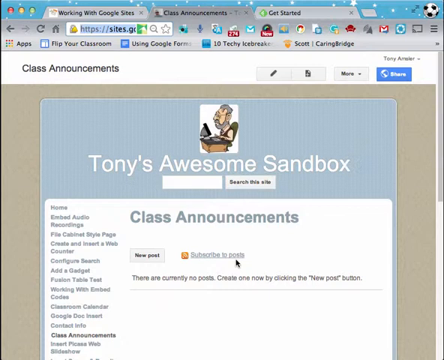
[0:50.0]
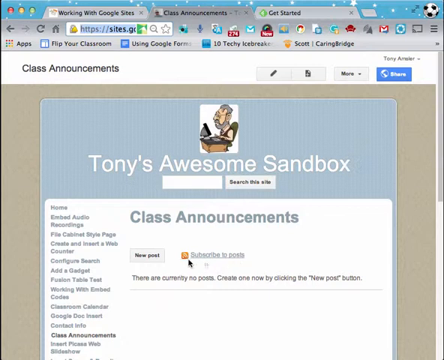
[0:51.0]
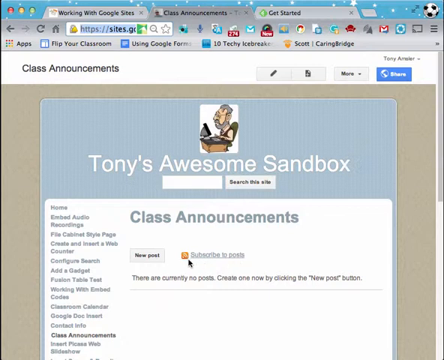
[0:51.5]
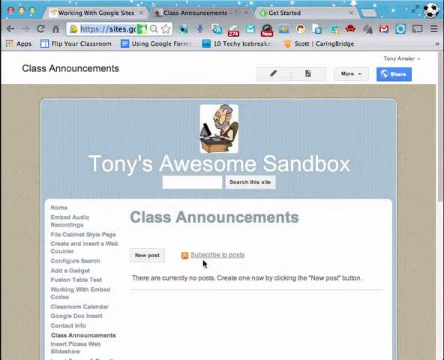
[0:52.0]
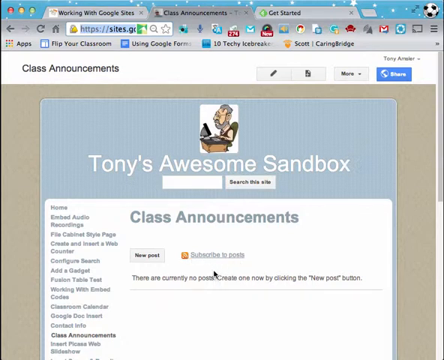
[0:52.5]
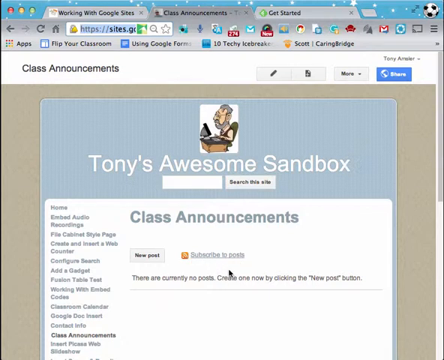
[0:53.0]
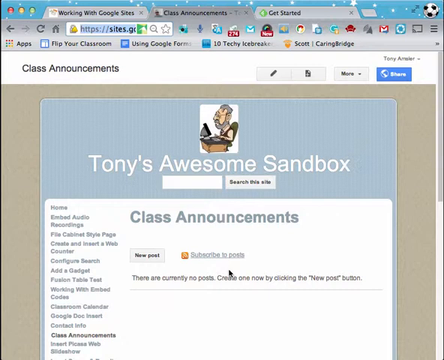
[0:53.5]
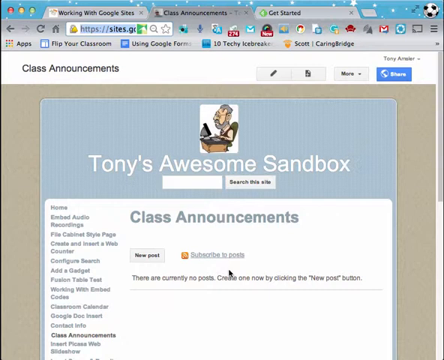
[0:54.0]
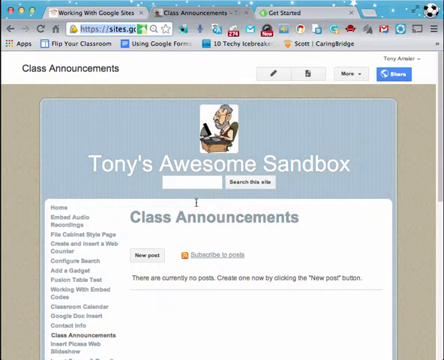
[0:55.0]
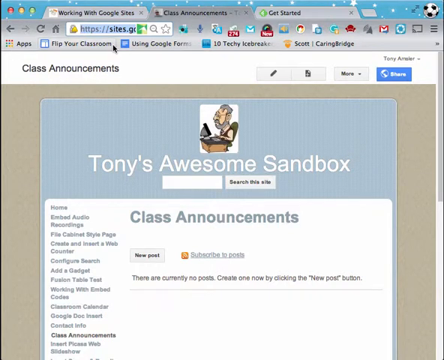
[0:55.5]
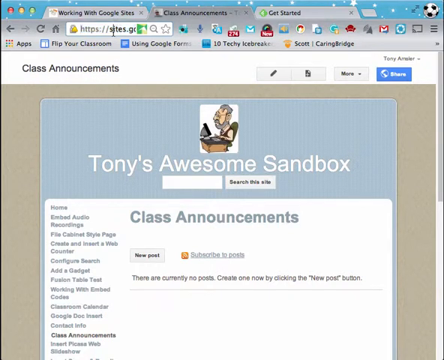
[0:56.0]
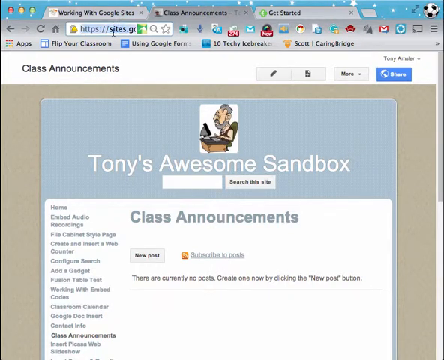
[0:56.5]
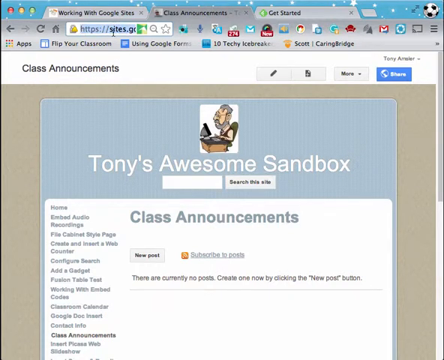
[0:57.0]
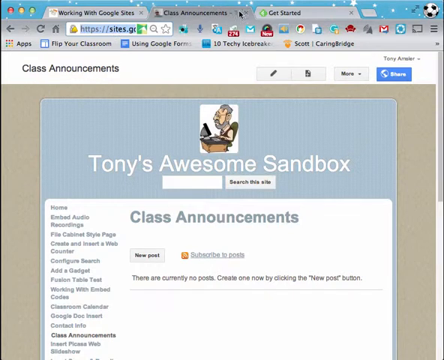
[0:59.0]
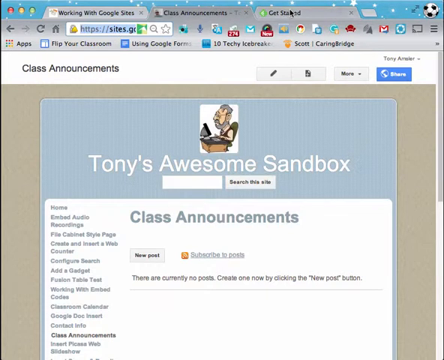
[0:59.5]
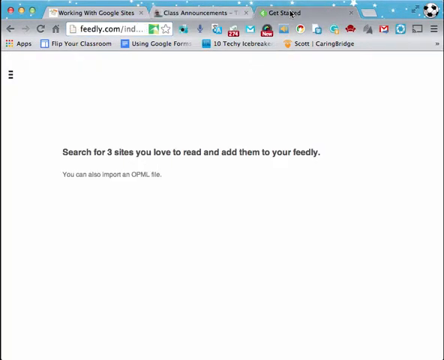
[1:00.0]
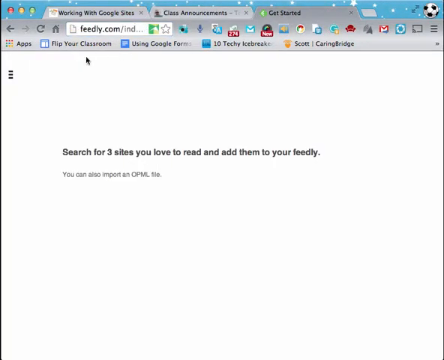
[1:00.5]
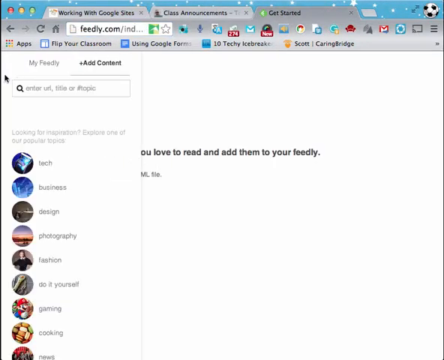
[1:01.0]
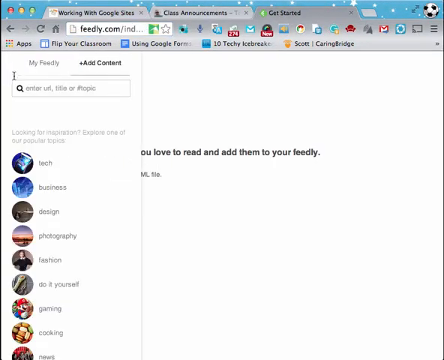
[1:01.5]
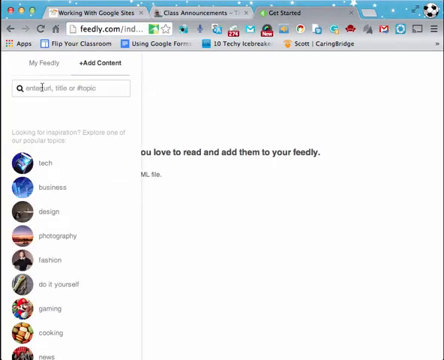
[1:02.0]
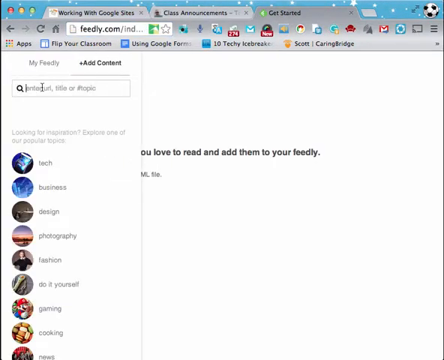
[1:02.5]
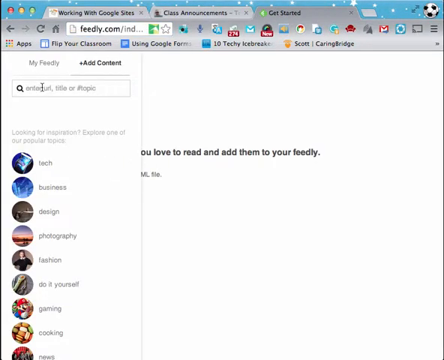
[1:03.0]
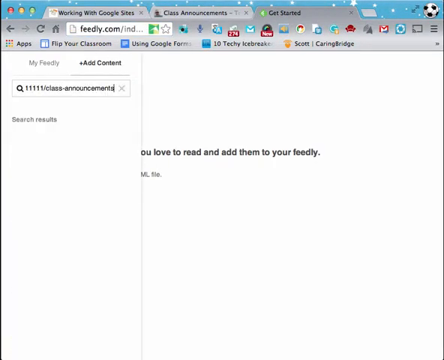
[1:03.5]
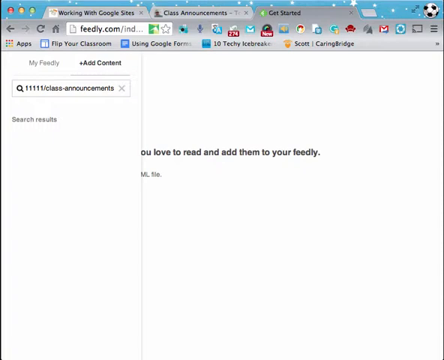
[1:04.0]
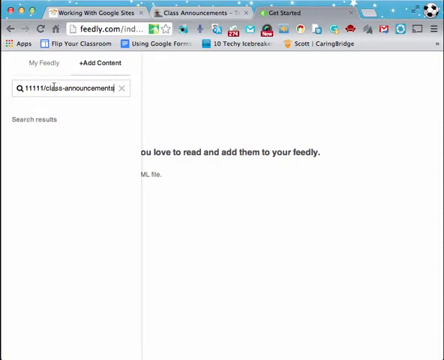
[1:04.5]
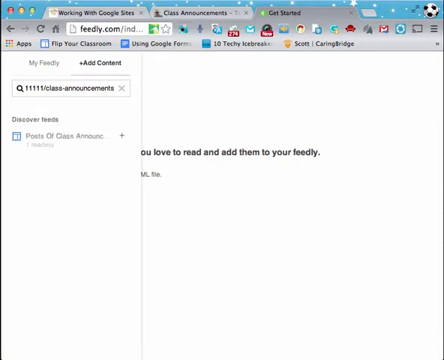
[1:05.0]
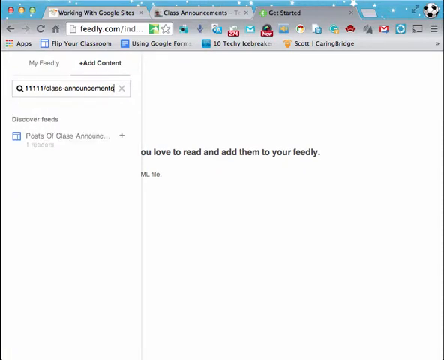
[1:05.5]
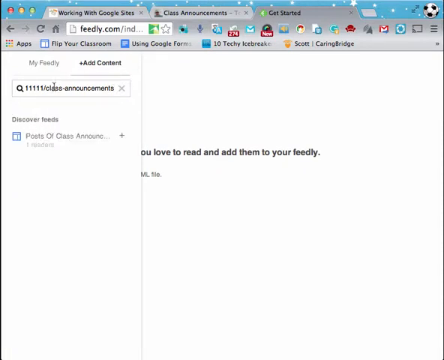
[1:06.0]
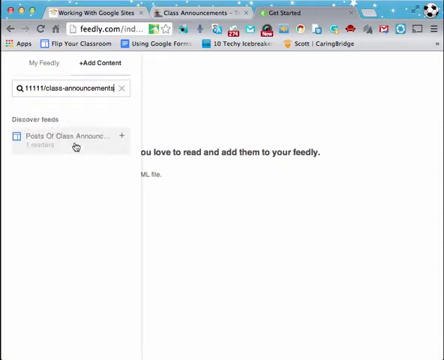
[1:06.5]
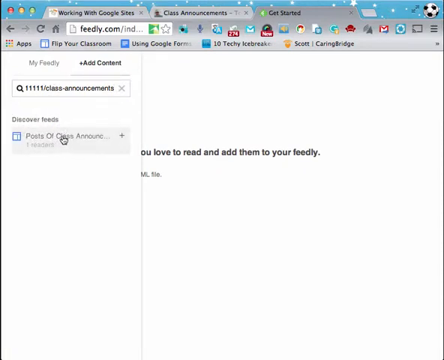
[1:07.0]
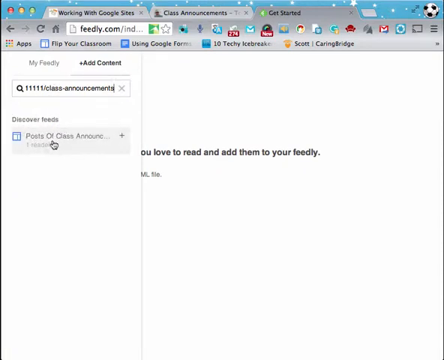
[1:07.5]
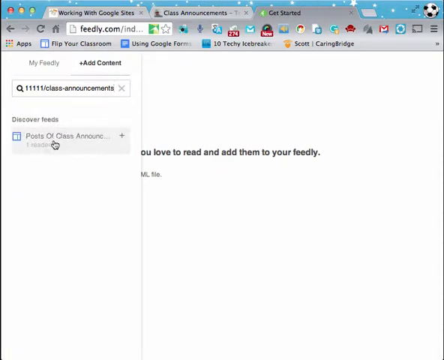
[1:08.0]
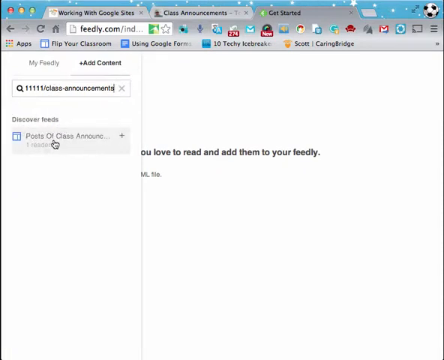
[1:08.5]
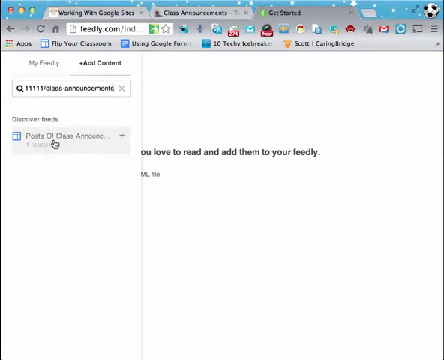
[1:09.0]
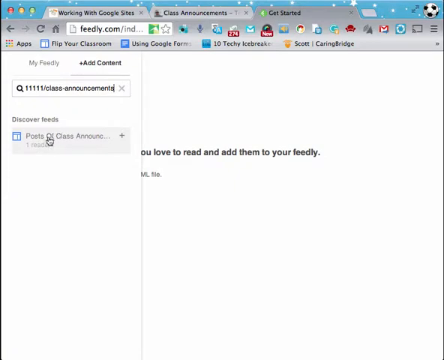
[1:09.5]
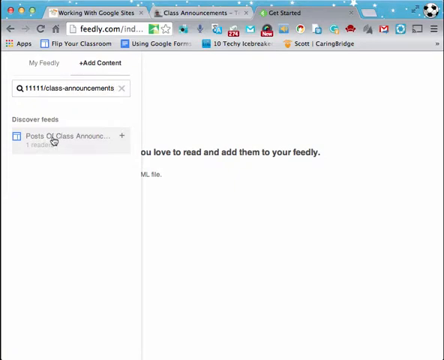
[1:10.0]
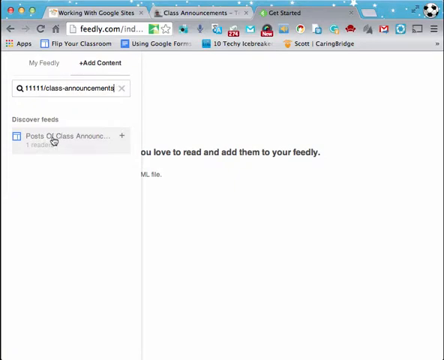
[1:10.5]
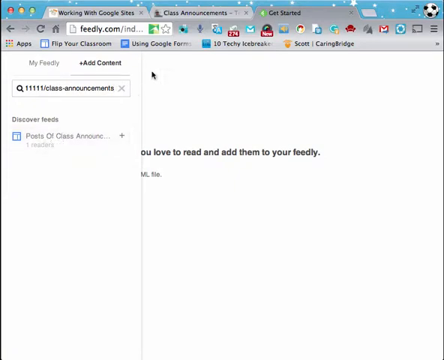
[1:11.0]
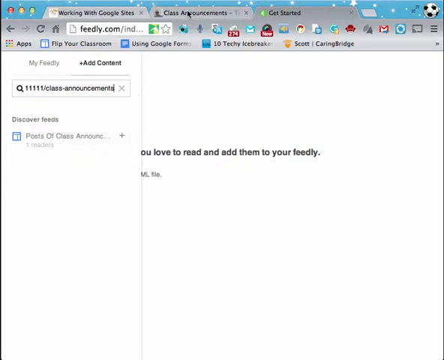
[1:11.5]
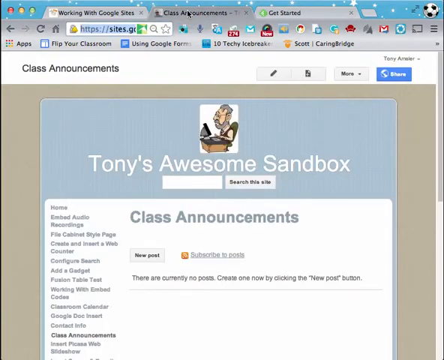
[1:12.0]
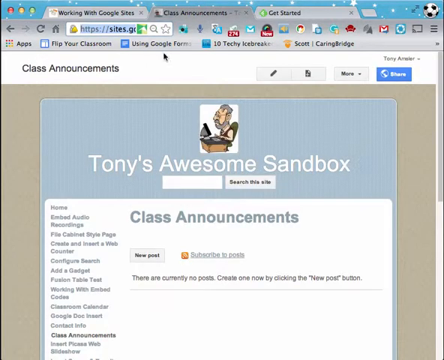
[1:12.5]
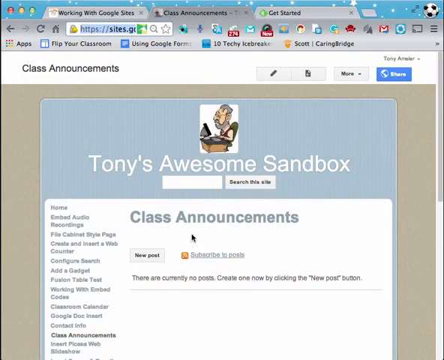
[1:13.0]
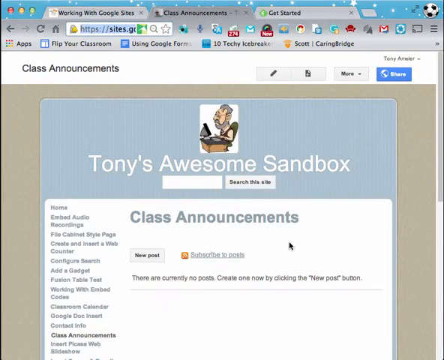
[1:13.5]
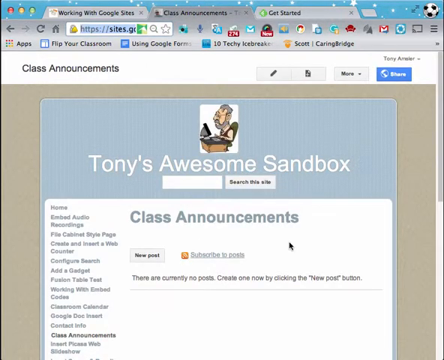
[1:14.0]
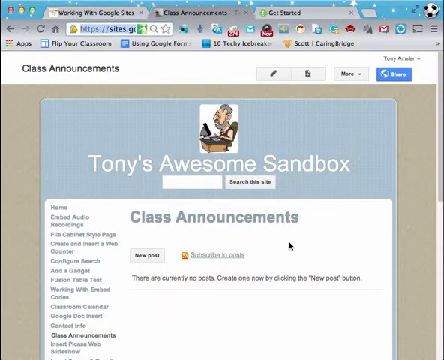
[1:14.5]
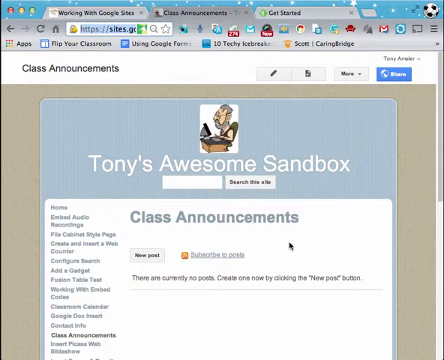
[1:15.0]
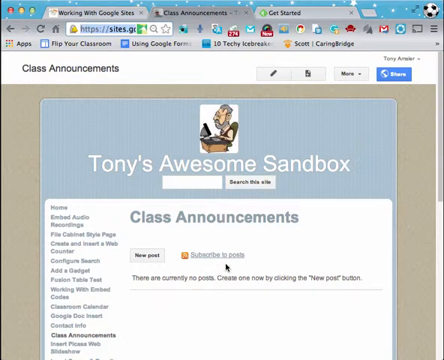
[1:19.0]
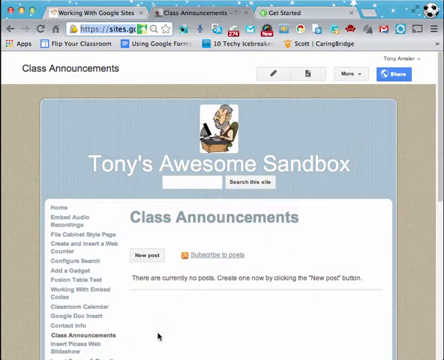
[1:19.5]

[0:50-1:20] The user kind of hovers over "Subscribe to posts," then goes to the top, clicks on the website address and highlights it. They click on the third tab, Get Started. To the left is something like a hamburger icon, and text reads "search for three sites you love to read and add them to your feed. You can also import," followed by smaller writing that apparently mentions an "OPML file." The user clicks the hamburger icon, and a search bar appears at the top of a drop-down box. They input a website, apparently copied from the original tab, and seemingly press enter, since a website appears under "Discover Feeds." It reads "Posts Of Class Announcements," with "Announcements" cut in half. The user then clicks back on the Class Announcements tab.